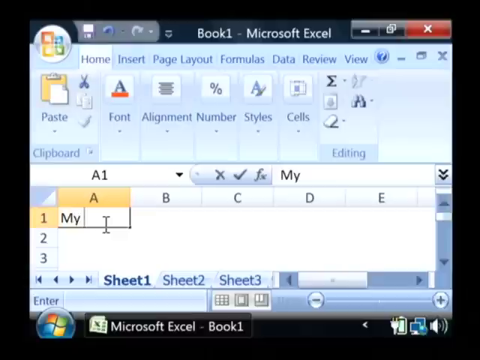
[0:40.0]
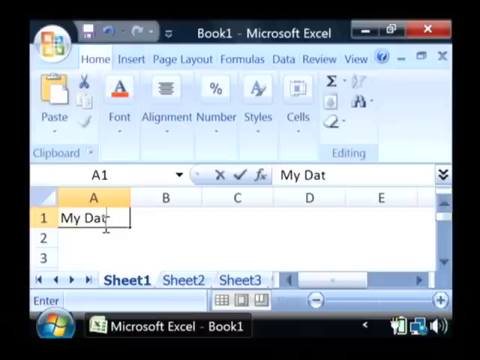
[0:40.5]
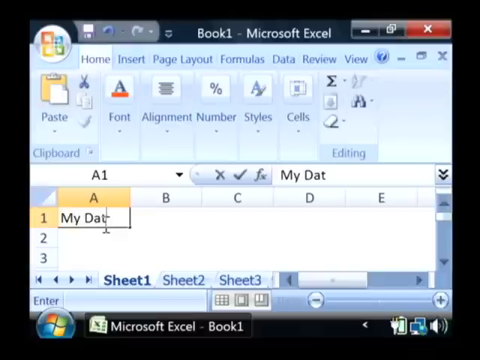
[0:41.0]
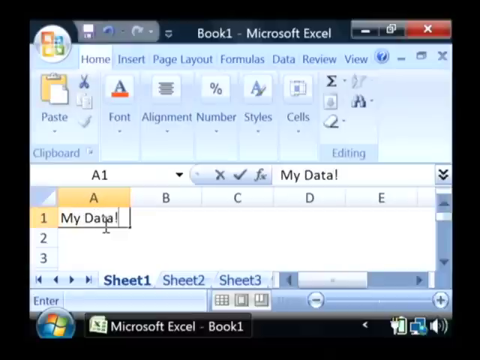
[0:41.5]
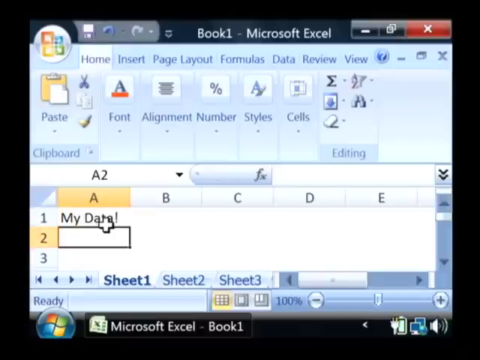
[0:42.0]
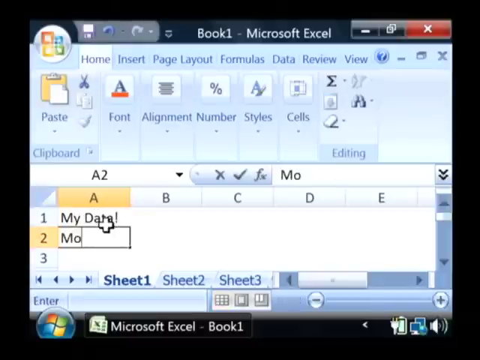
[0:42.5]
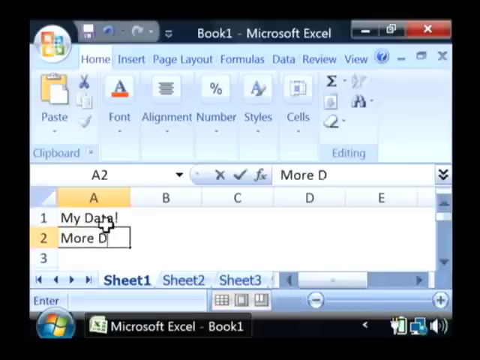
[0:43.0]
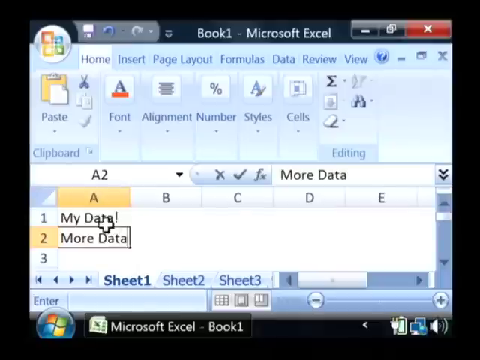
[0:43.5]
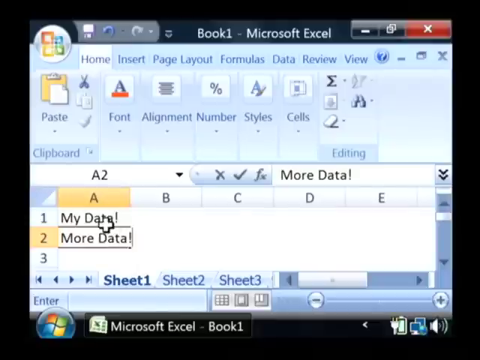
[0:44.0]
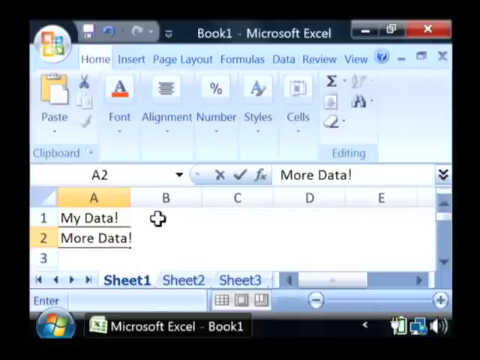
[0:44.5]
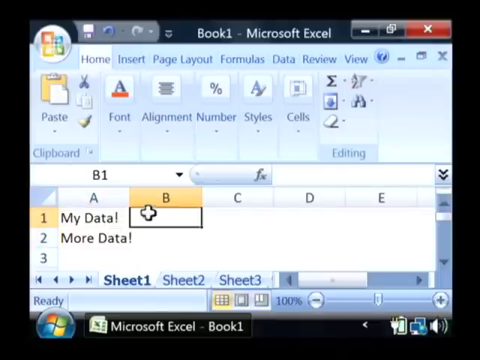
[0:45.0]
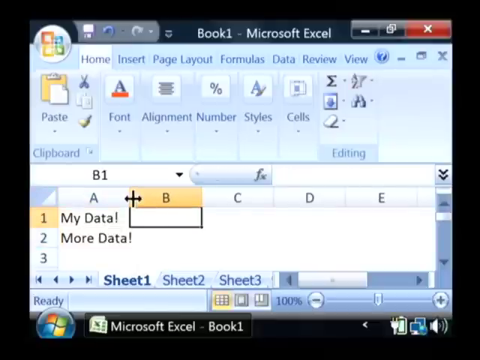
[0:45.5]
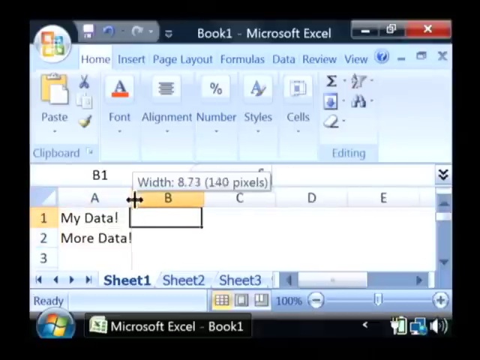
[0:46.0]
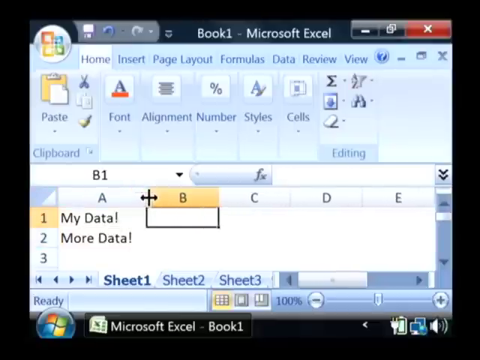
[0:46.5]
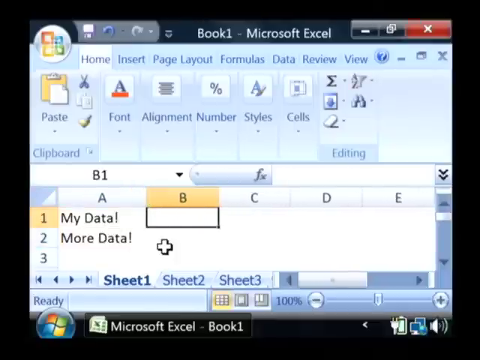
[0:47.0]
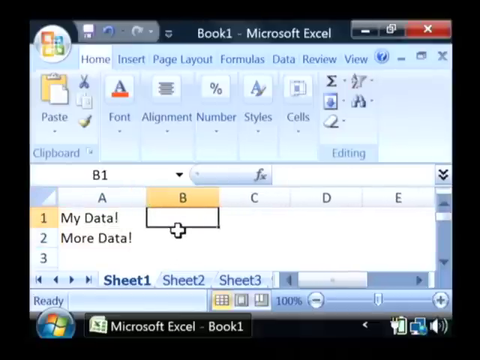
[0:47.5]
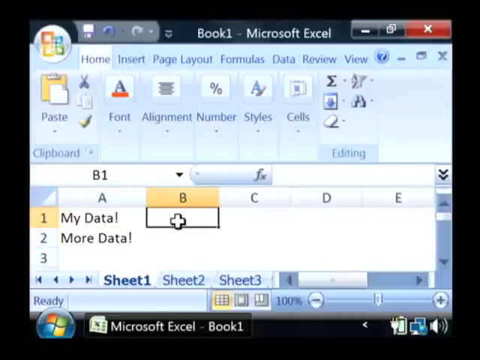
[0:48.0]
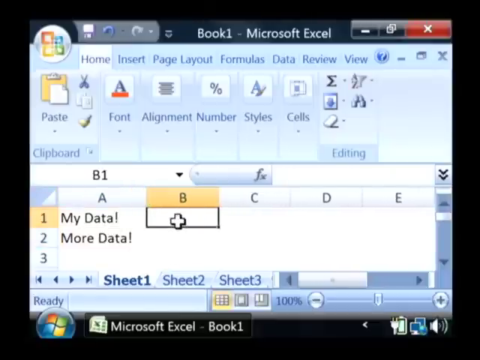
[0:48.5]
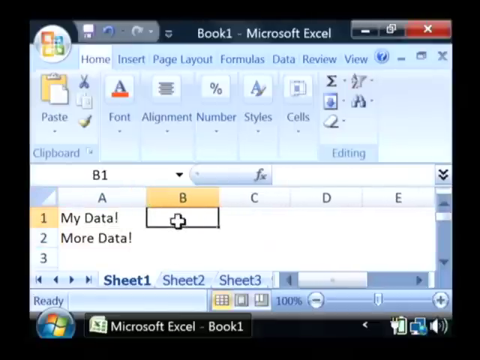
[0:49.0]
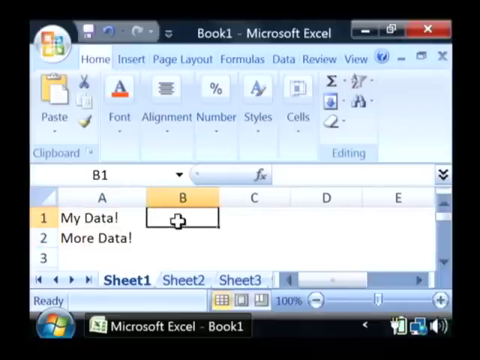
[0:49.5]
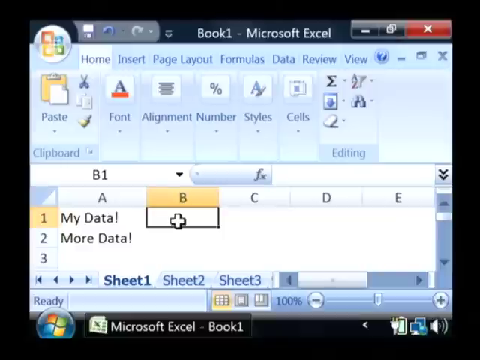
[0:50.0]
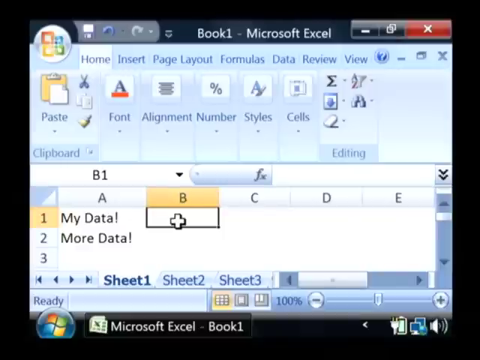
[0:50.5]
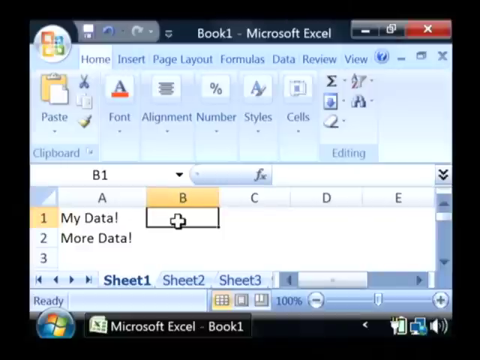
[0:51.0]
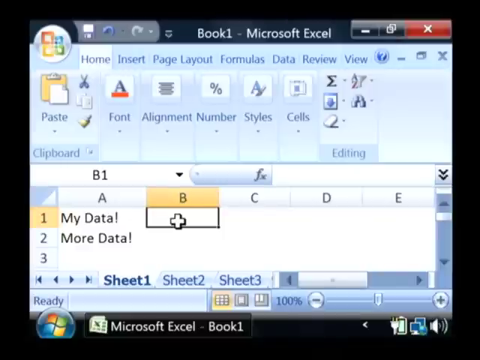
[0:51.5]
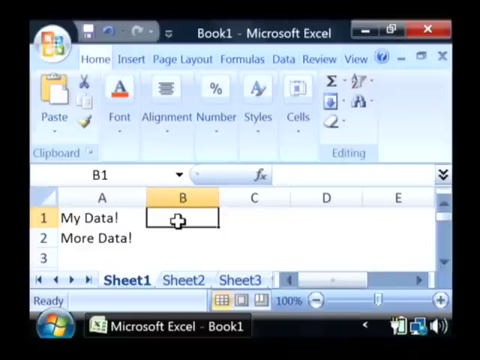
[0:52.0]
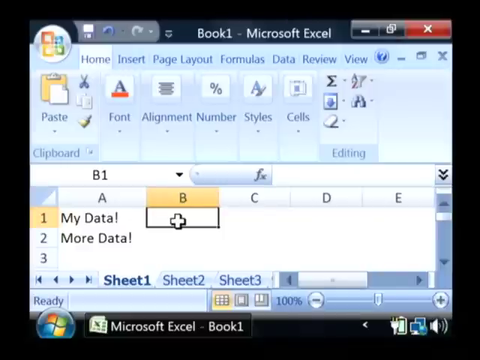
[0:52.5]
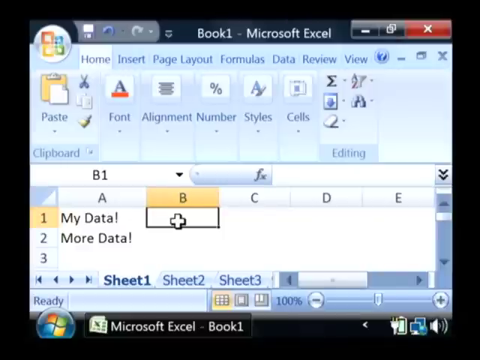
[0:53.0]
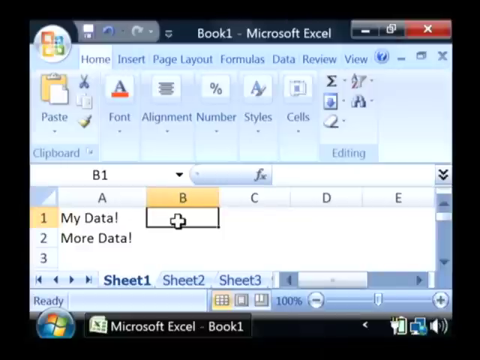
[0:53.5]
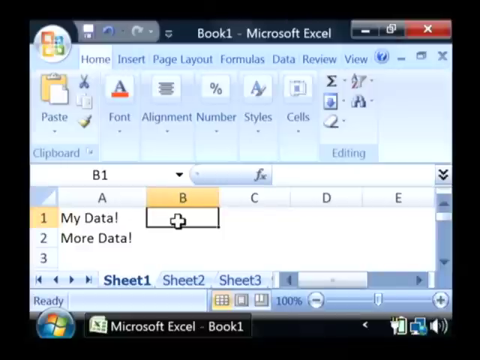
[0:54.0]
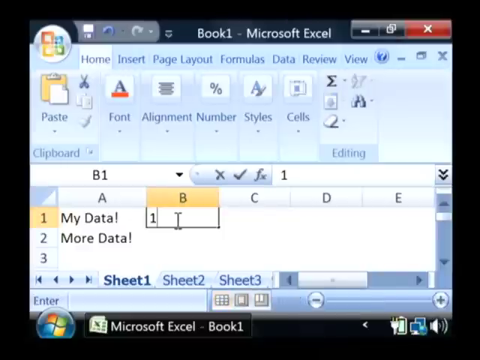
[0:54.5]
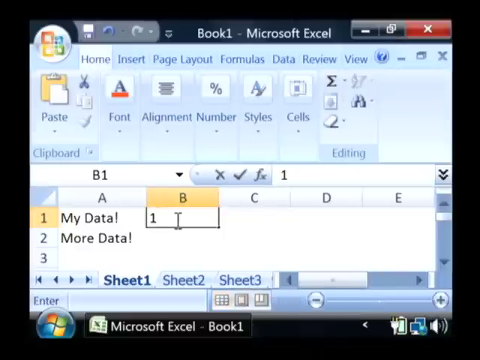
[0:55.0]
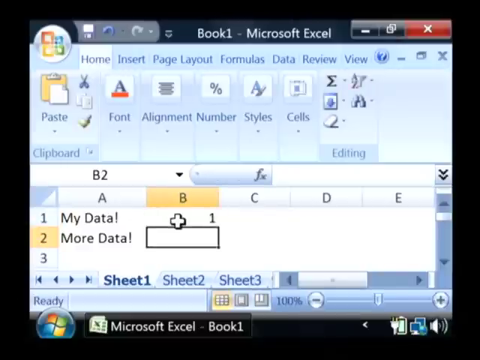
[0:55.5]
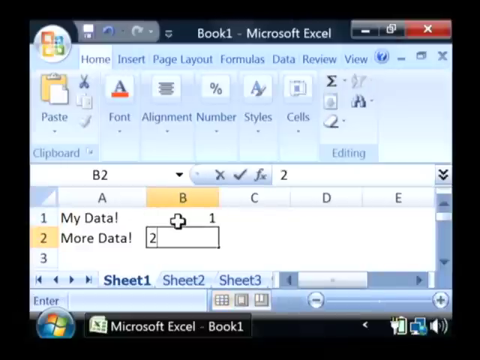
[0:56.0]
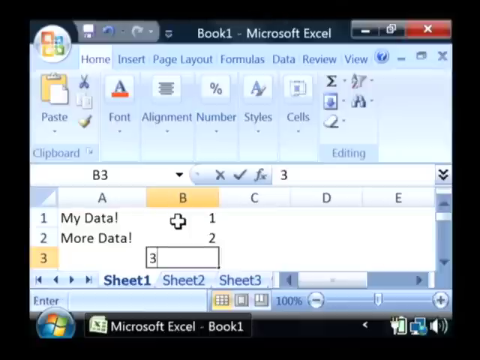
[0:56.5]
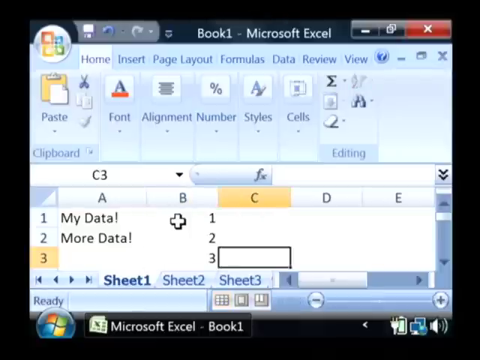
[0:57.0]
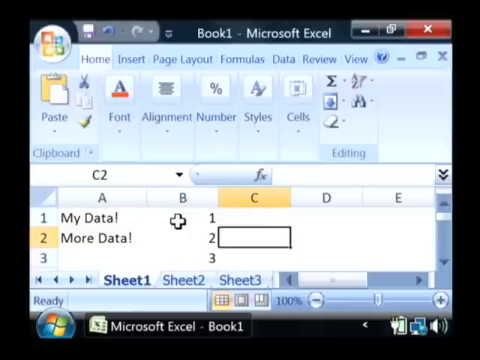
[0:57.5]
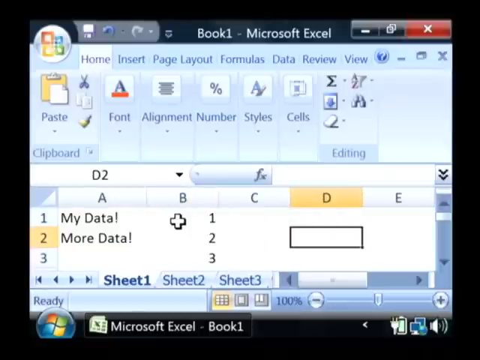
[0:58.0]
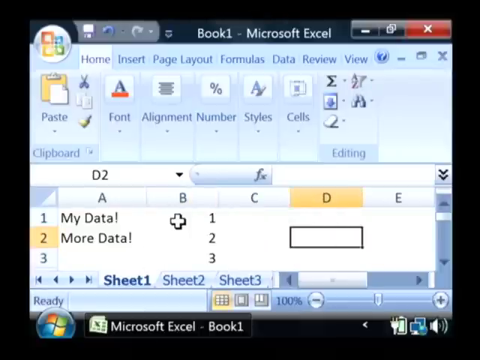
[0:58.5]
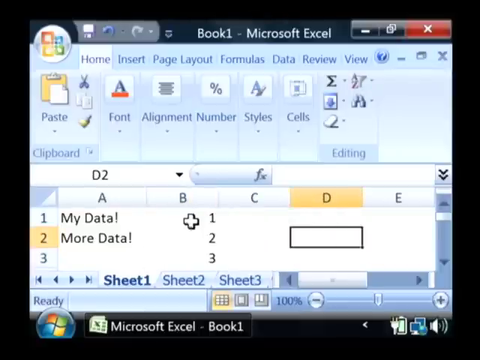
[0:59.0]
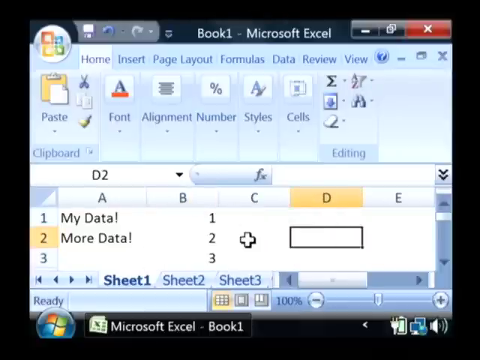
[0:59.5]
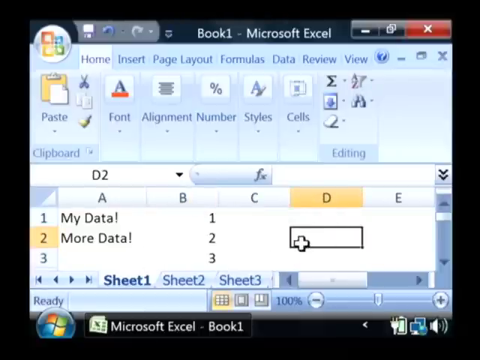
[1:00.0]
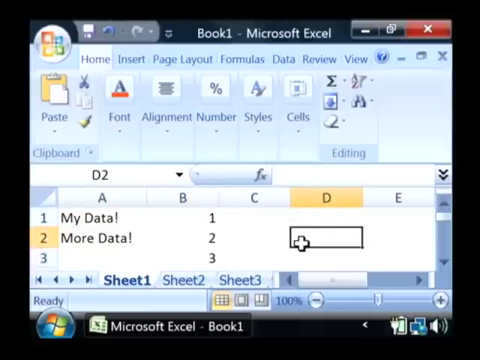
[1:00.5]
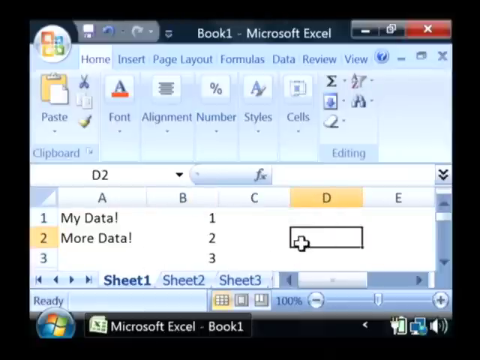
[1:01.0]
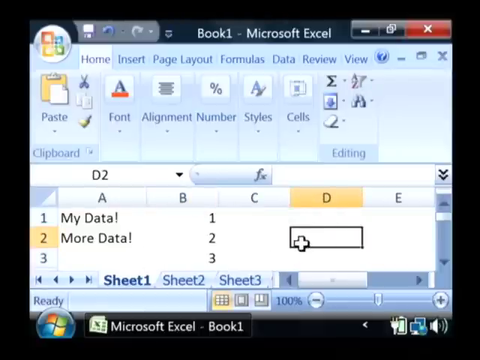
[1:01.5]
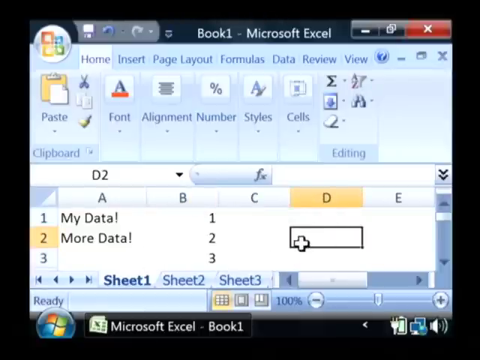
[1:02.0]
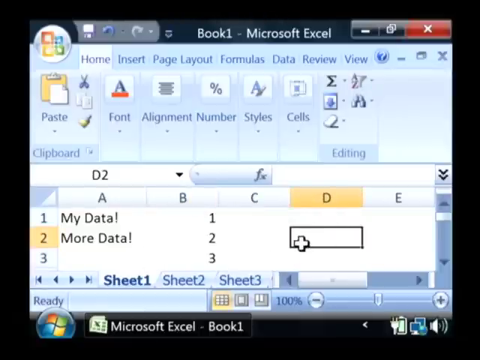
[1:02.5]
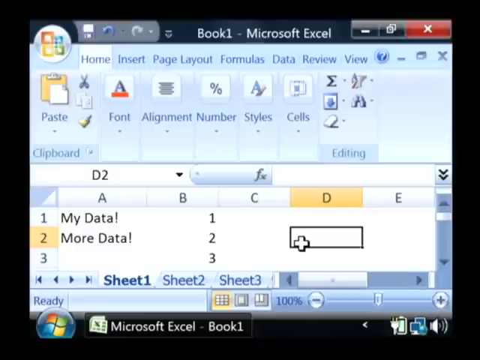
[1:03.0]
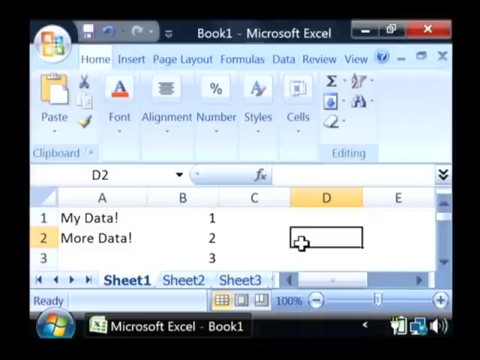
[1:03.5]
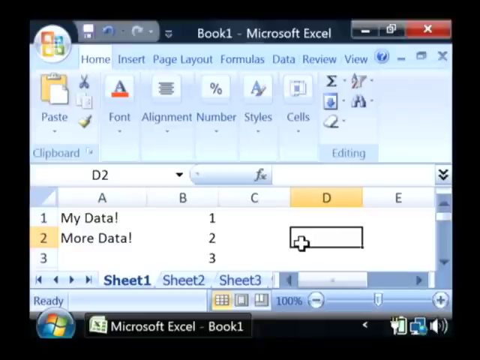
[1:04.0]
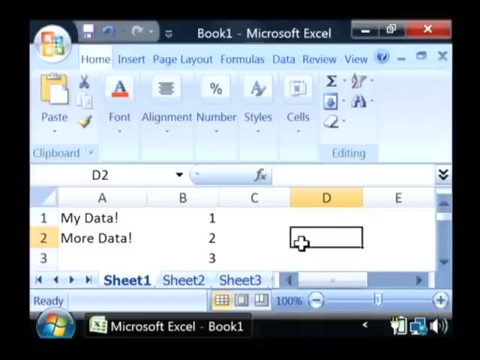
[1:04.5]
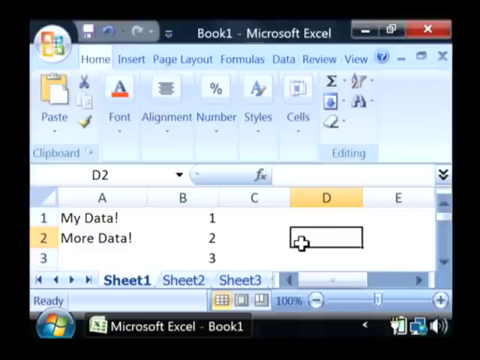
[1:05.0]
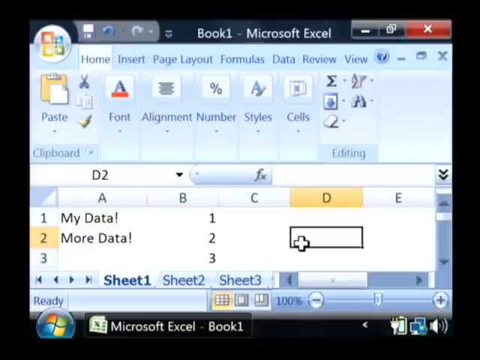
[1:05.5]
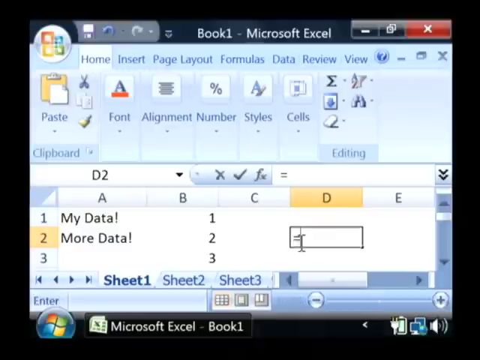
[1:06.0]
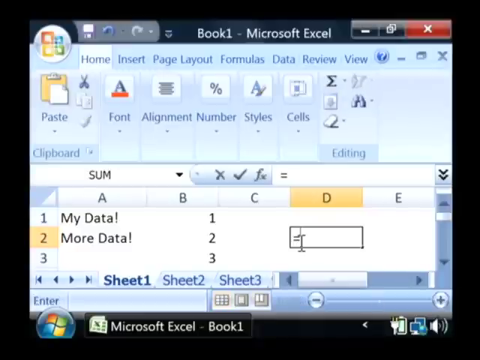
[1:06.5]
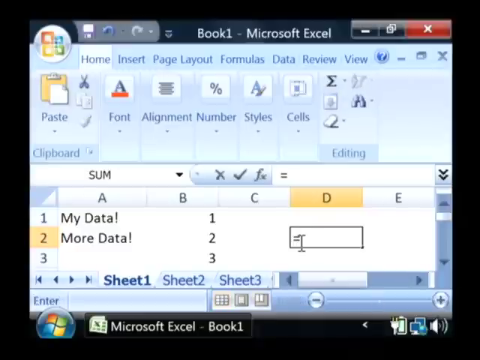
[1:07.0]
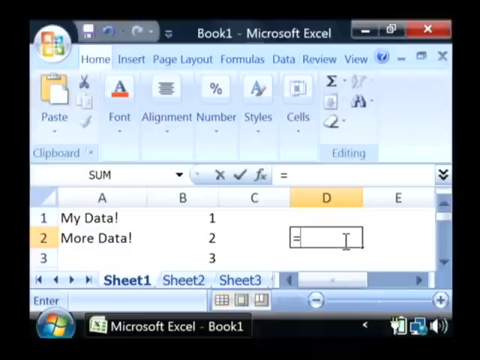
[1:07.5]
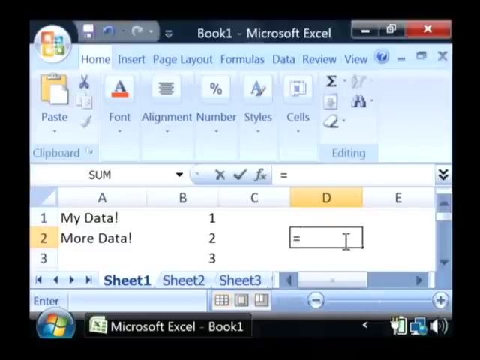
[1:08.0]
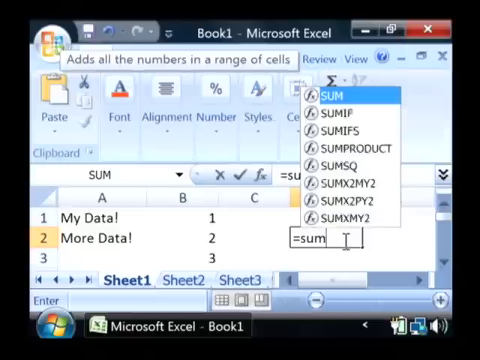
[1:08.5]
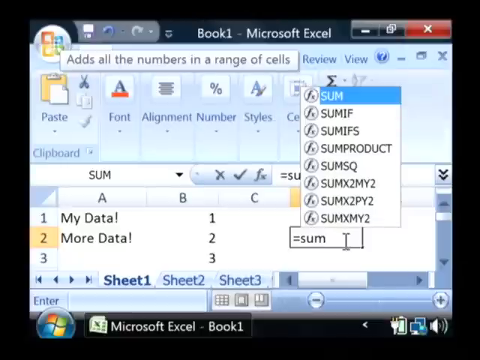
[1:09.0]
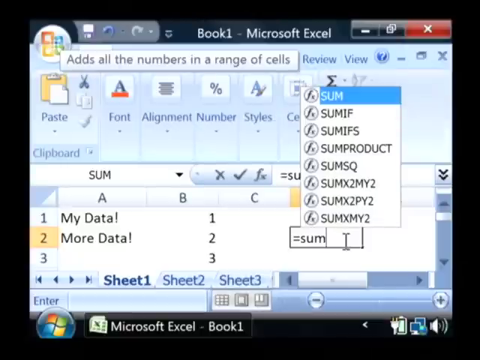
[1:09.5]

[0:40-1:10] The Microsoft Excel 2007 program, in its typical powder blue color, is zoomed in to show only columns A-E and rows 1-3, with a bit of a black border of the computer background showing. The user is typing in cell A1 and types "my data!". They click on cell A2 and type "more data!". They grab the A header and drag it to the right to make that column a bit larger, then click on B1 and type 1, click on B2 and type 2, and click on B3 and type 3. They then click on D2 and enter the formula "=sum(". The person appears to be giving a tutorial on setting up a spreadsheet in Microsoft Excel 2007.